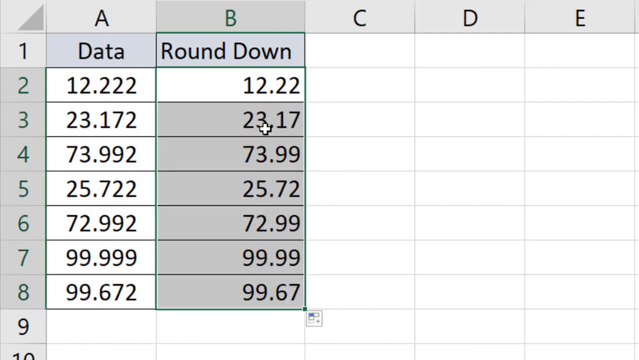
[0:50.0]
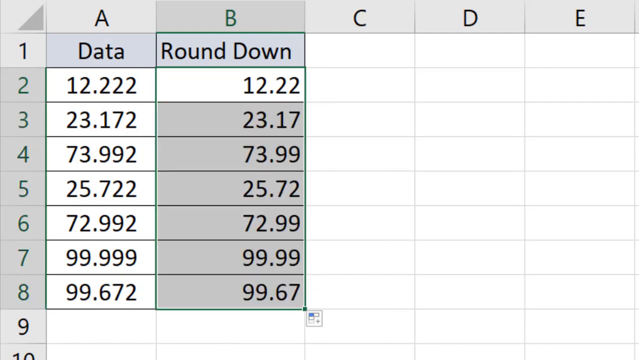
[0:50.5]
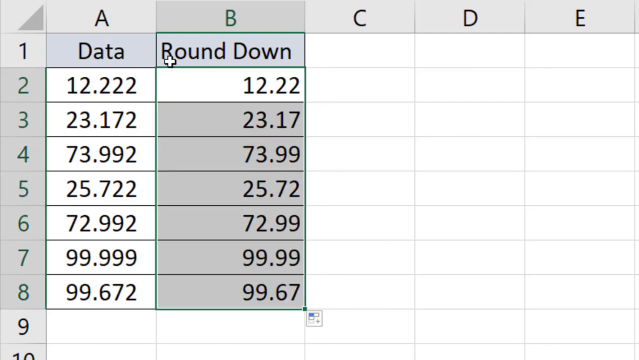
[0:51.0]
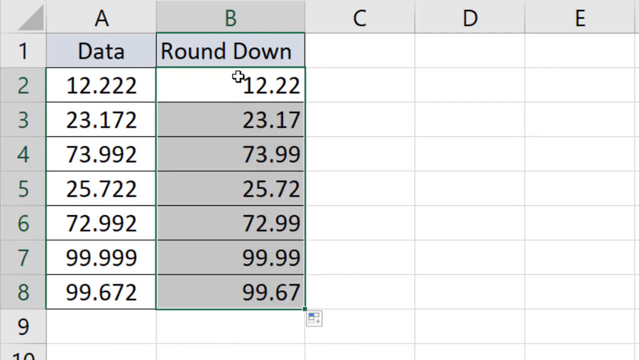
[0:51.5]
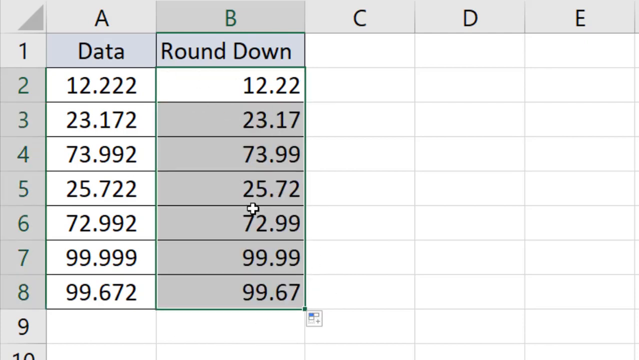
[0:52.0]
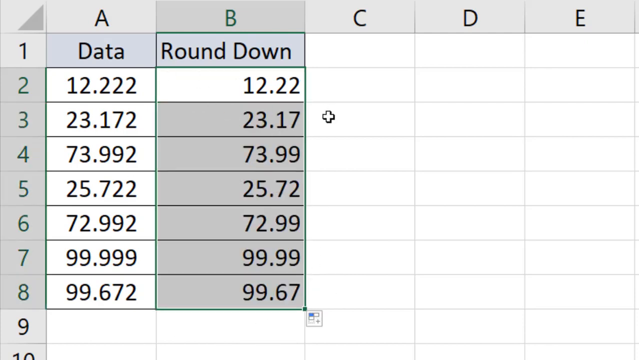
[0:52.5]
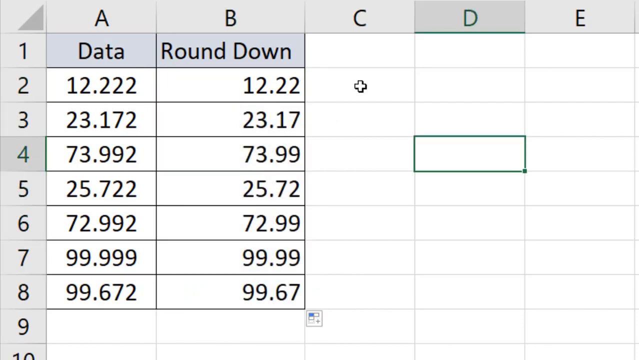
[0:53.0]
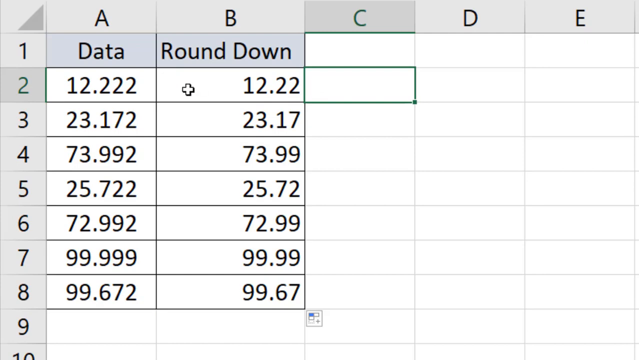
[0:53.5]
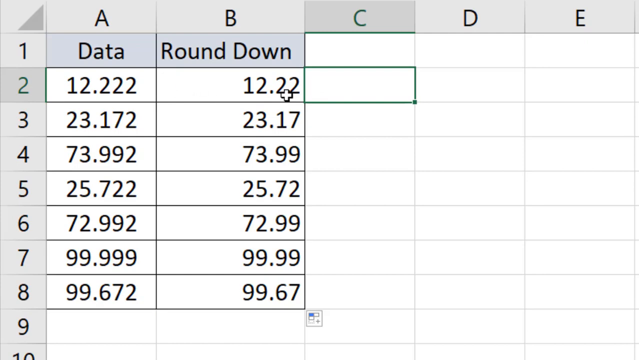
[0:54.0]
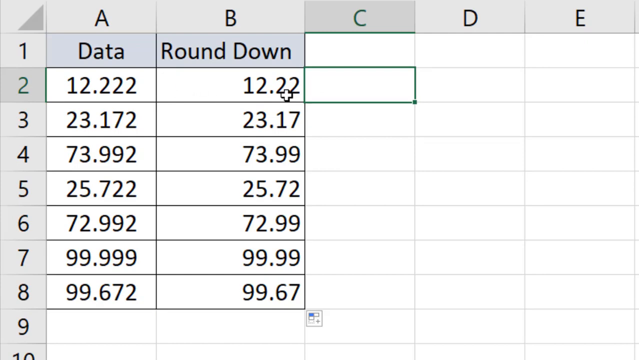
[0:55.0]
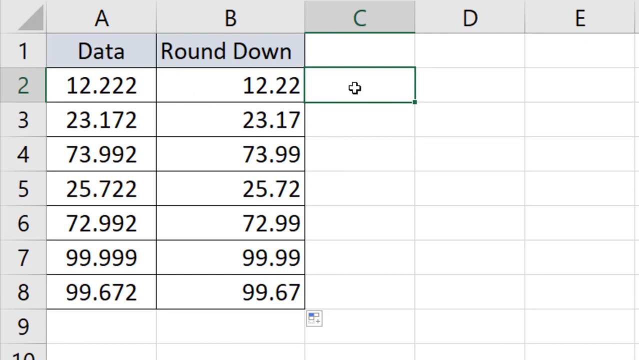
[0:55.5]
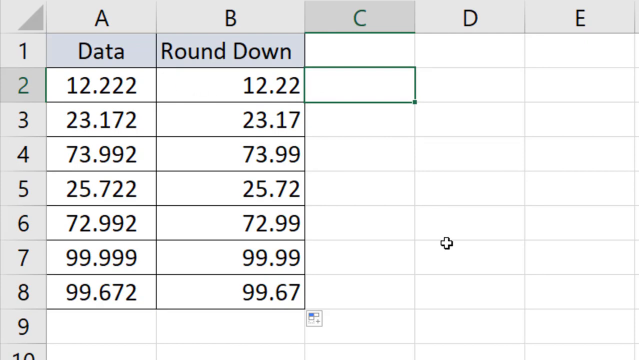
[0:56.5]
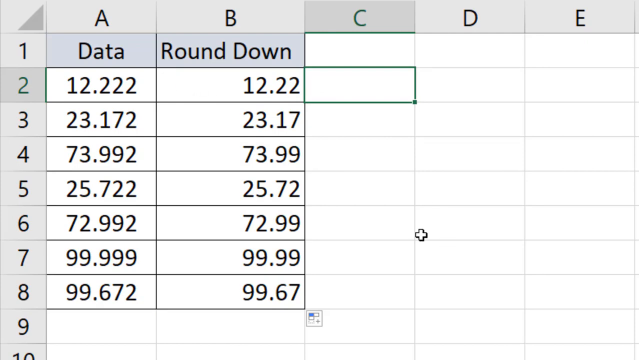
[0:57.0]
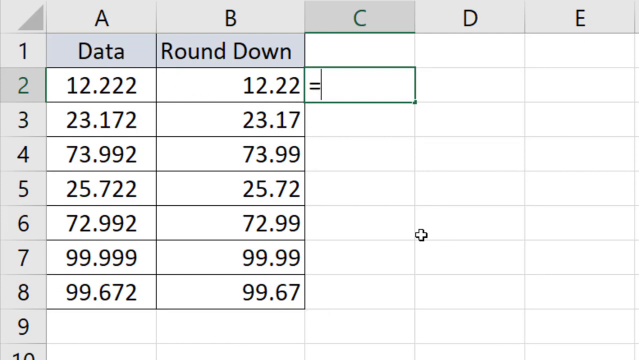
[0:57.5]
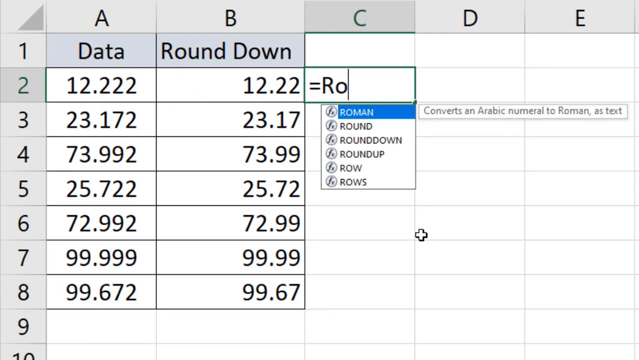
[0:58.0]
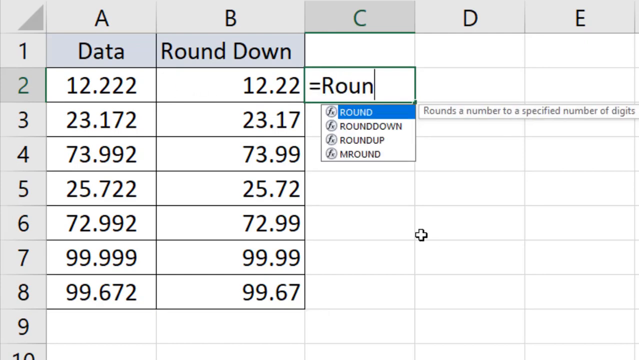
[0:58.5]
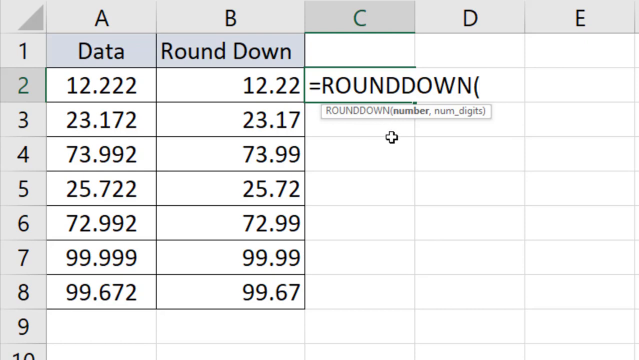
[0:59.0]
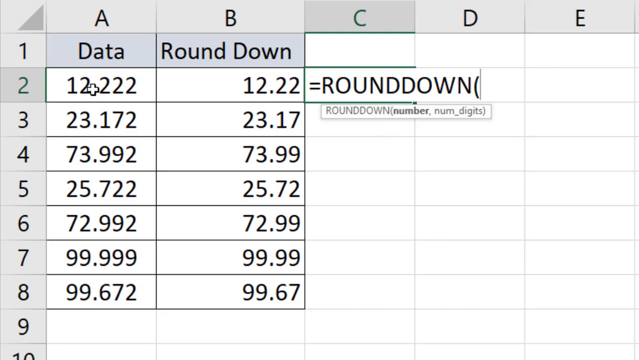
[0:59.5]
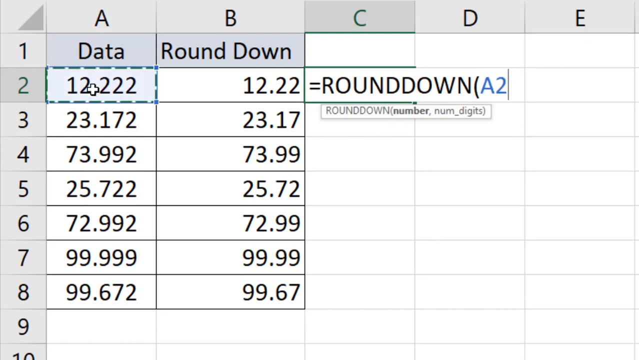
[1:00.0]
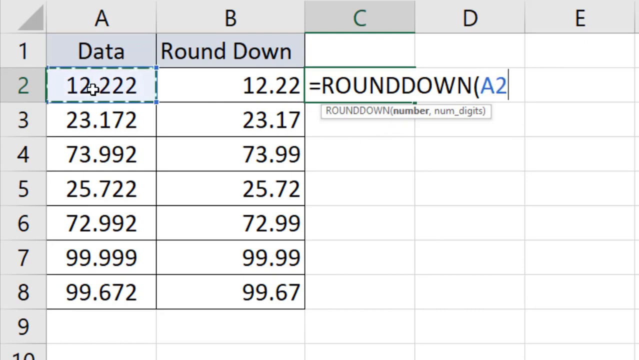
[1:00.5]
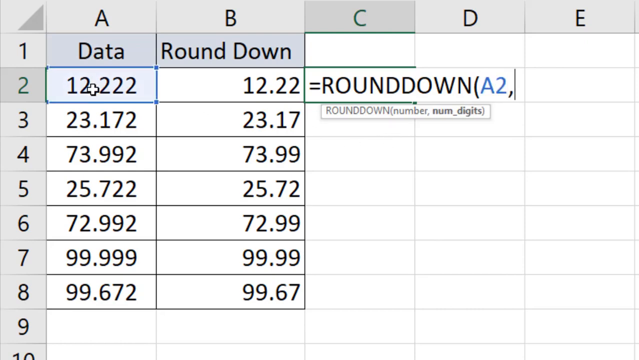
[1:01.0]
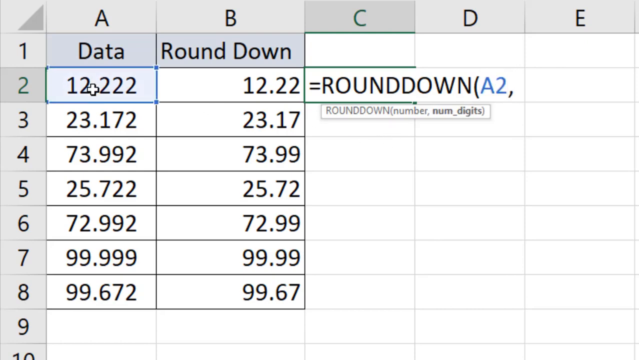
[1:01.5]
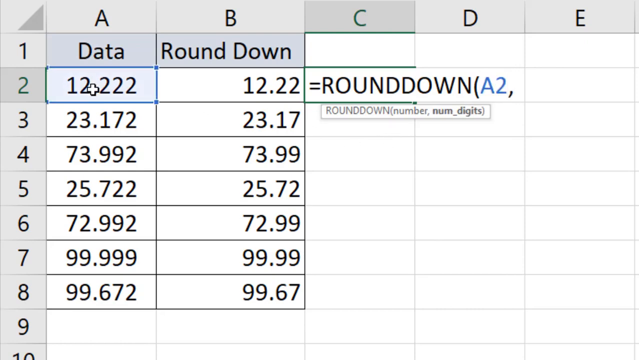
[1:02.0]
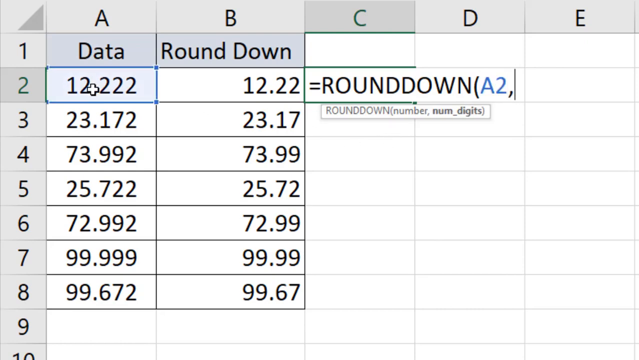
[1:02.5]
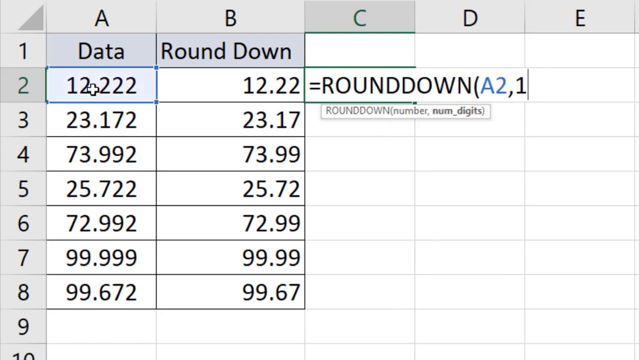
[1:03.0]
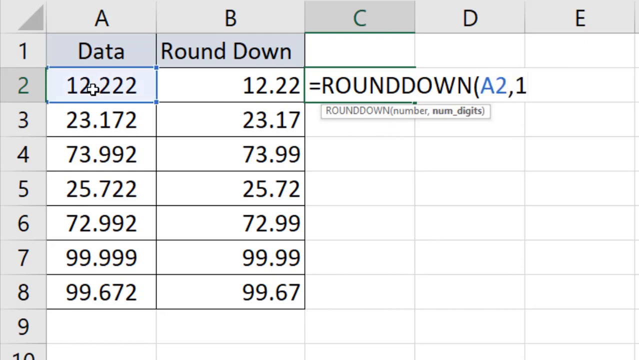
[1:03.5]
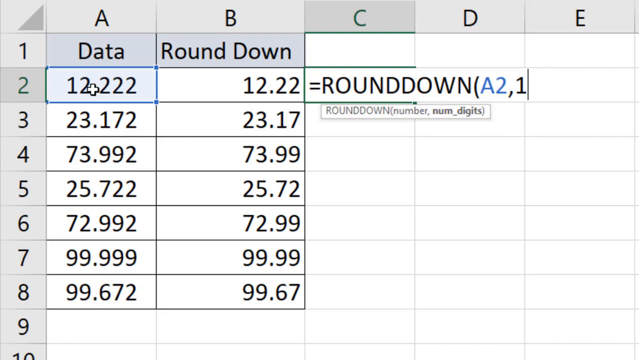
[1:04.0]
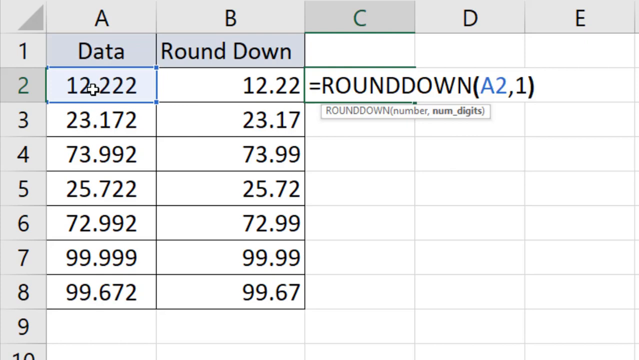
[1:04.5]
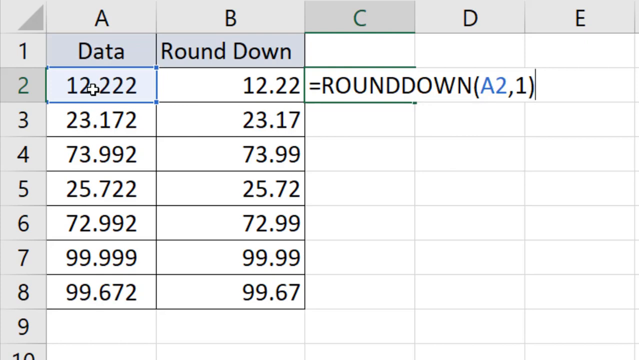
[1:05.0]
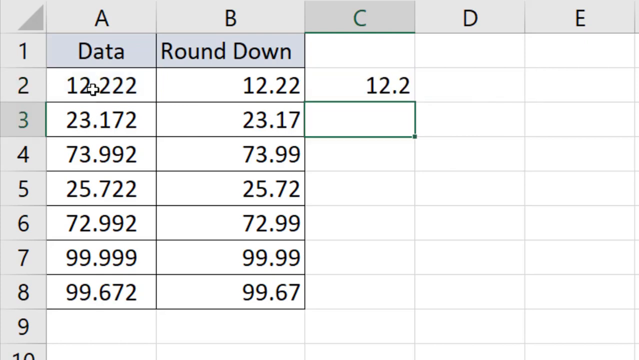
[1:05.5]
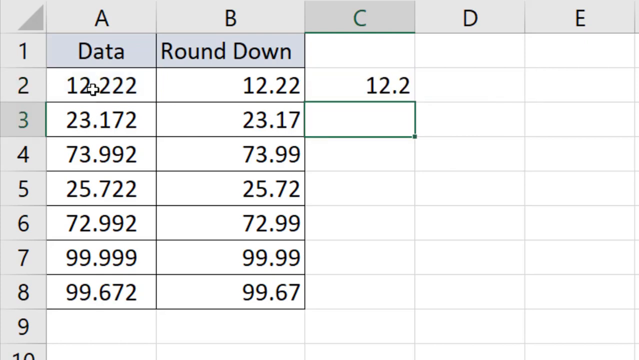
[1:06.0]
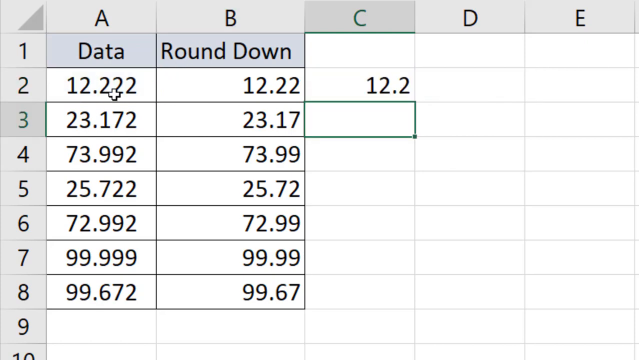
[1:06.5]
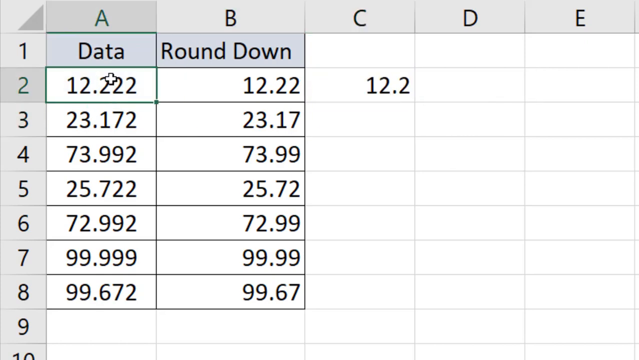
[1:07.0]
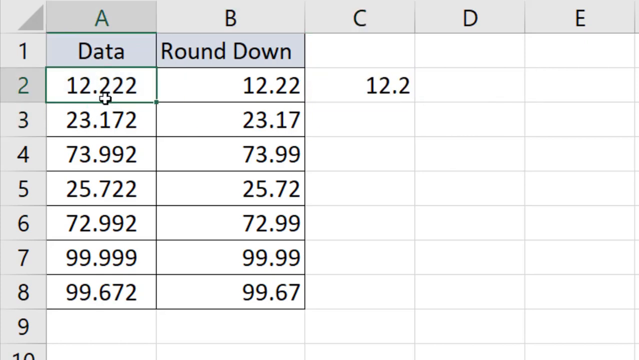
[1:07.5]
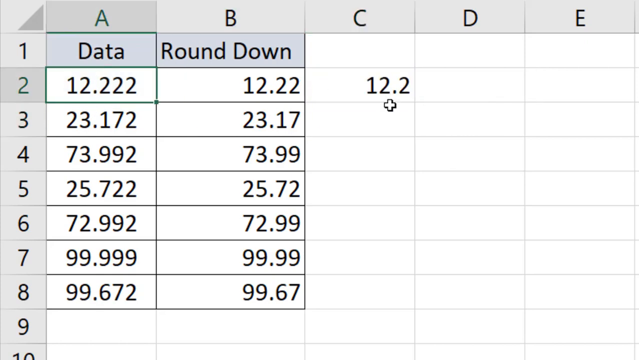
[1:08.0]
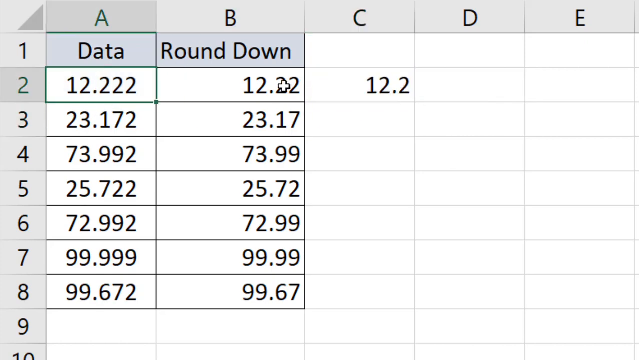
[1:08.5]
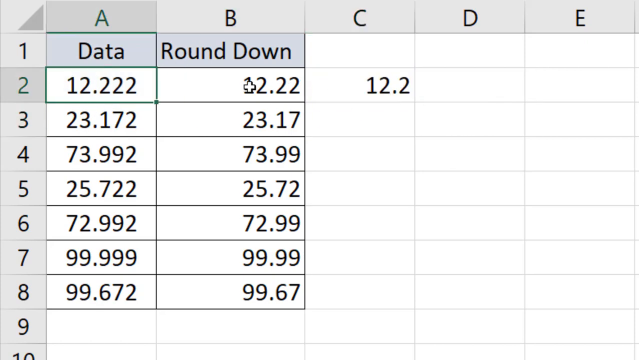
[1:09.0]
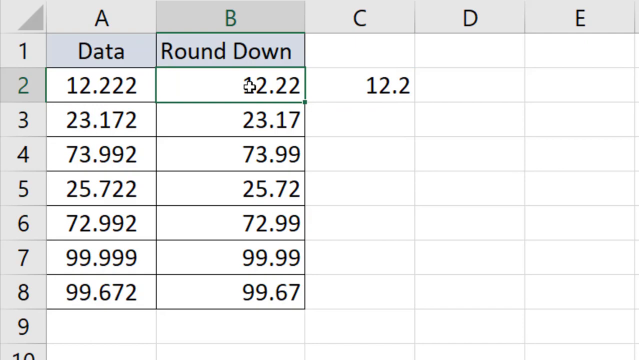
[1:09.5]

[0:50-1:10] The same page shows rows 1 to 10, with rows 9 and 10 blank. Row 1 has data and is rounded down, and row 2 is also rounded down, with A2 in big letters. The screen shows only a computer with lines, letters and numbers, with no humans, kids, animals, clothes or coloring.